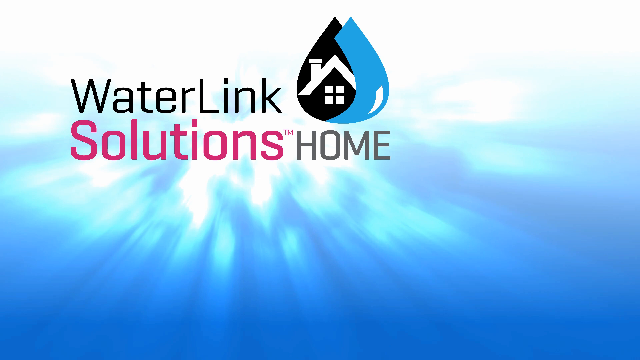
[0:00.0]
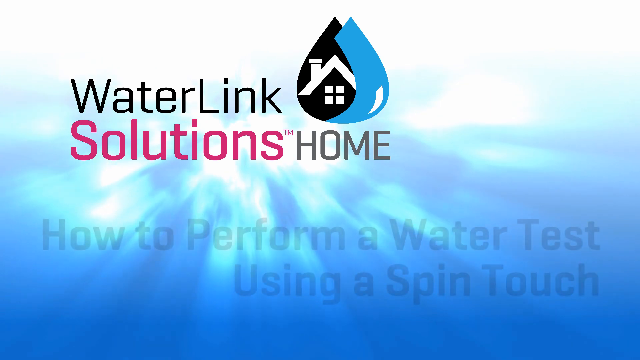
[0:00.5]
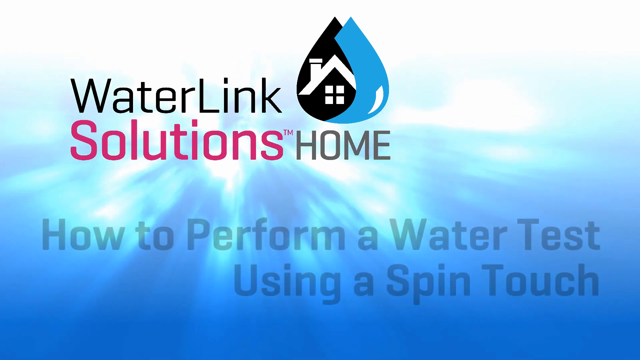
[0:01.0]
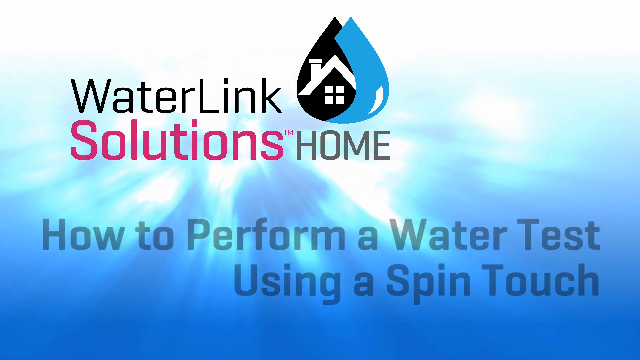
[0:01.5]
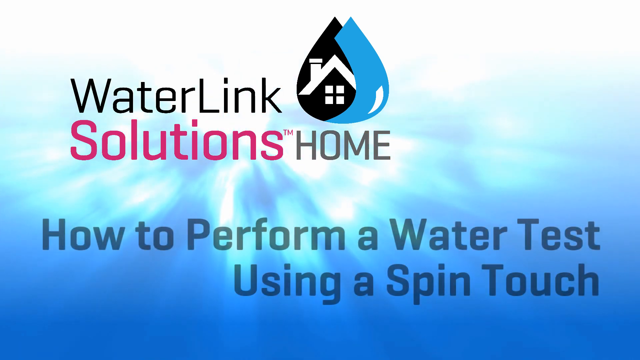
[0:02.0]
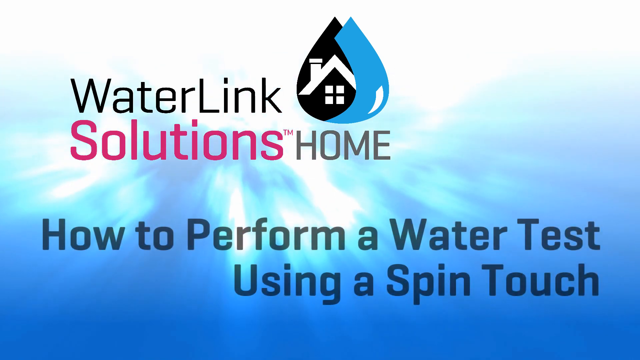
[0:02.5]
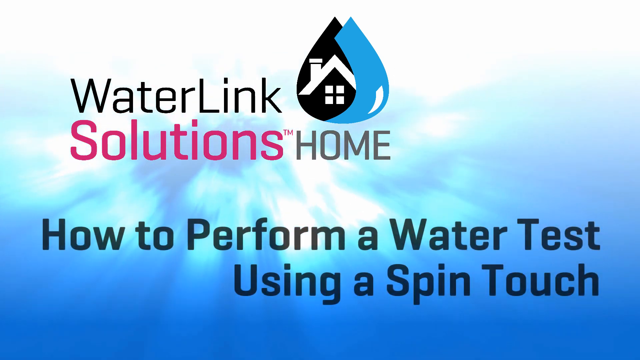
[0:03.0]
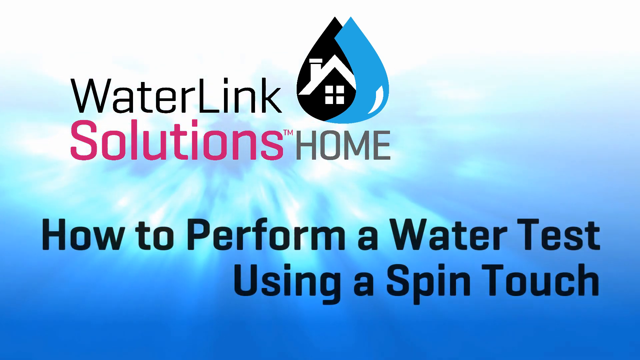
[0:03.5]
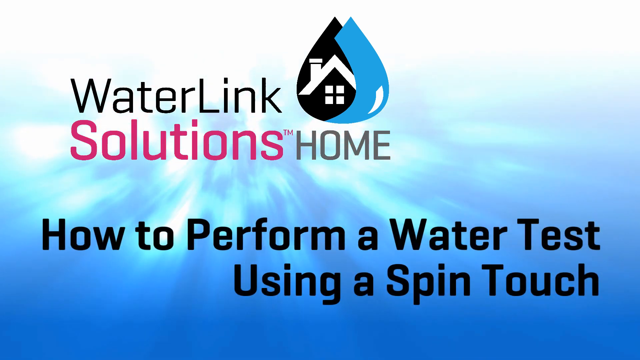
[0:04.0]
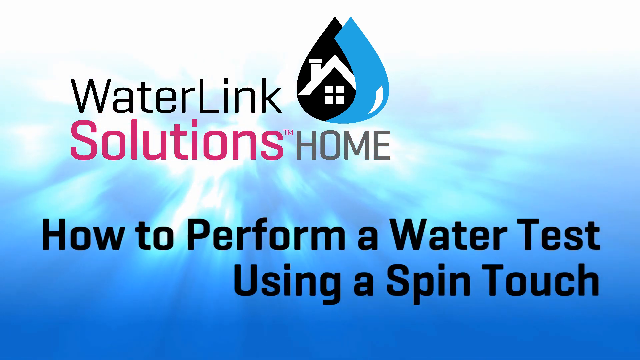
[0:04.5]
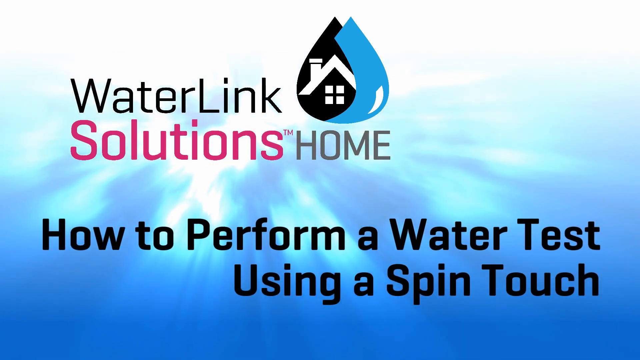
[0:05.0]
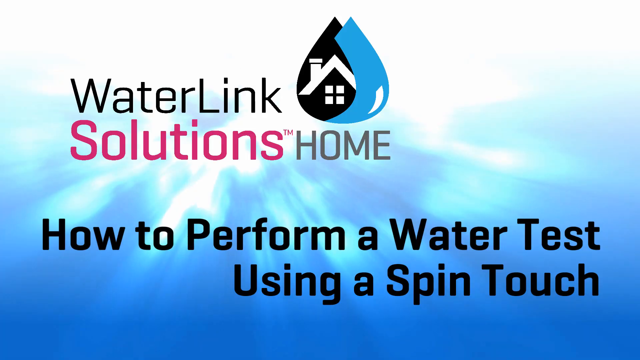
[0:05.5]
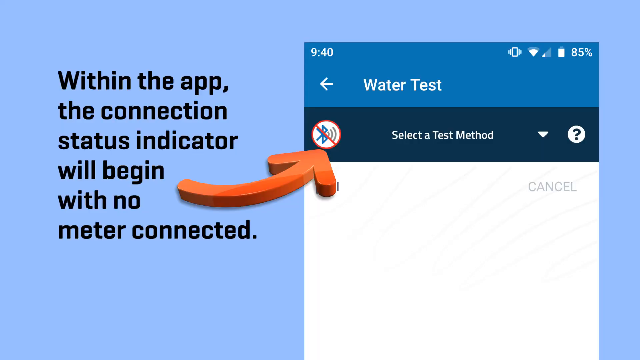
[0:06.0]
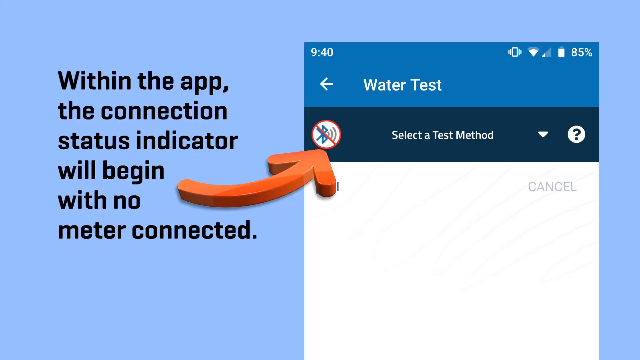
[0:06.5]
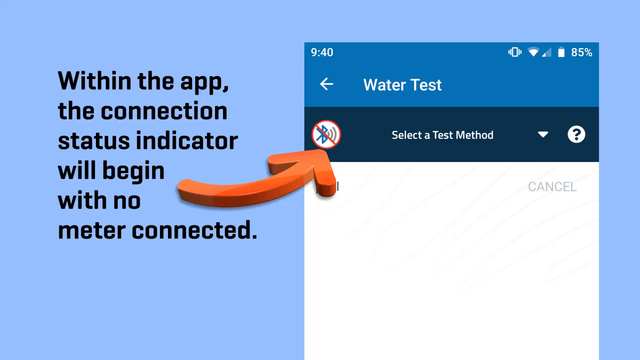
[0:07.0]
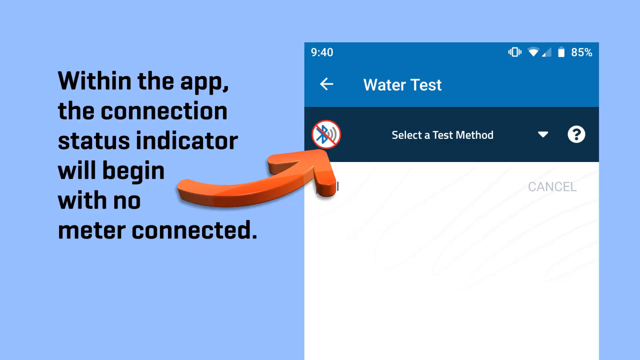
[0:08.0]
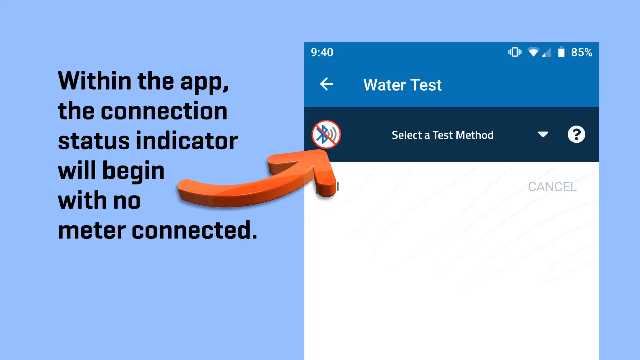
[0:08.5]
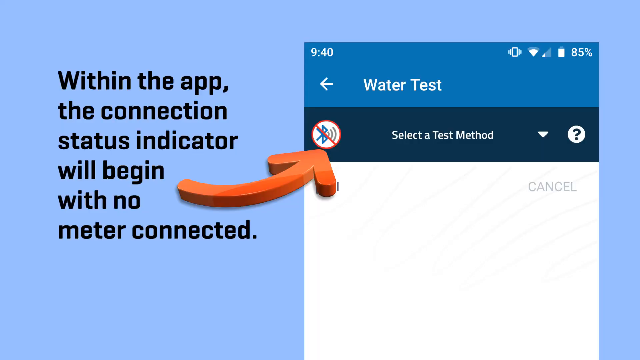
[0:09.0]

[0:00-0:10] A blue, watery background moves, with white, dark blue and light blue tones; it seems to be underneath the ocean. Text reads "water link solutions home", with "solutions" in red and "water link home" in black. Underneath, it says "how to perform a water test using a spin touch". There is also a logo that looks like a water droplet with a house inside it. There is a lot of movement in the water, making it seem somewhat alive. The next screen shows text that reads "within the app the connection status indicator will begin with no meter connected". A red arrow points over to a white symbol with a red cross on it, as if to indicate it is not working. A box says "water test" with an arrow pointing to the left, and it says "select a test method"; it looks like it can be clicked to select a test method. Underneath, it says "cancel". This is set on a blue background, and there is a blue square with white; on the white part is the word "cancel". It appears to be a screenshot of an app on a phone, as the battery indicator and time are visible.